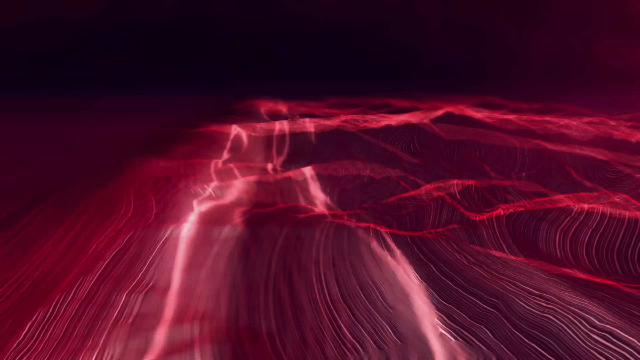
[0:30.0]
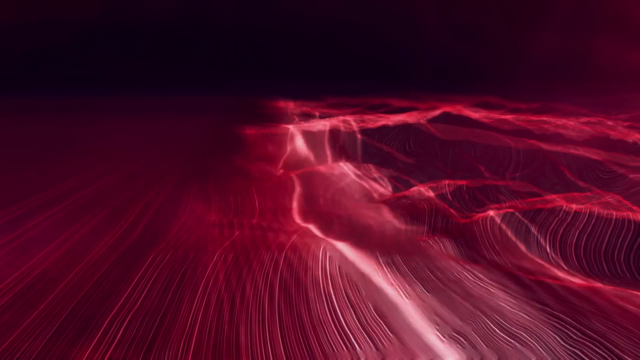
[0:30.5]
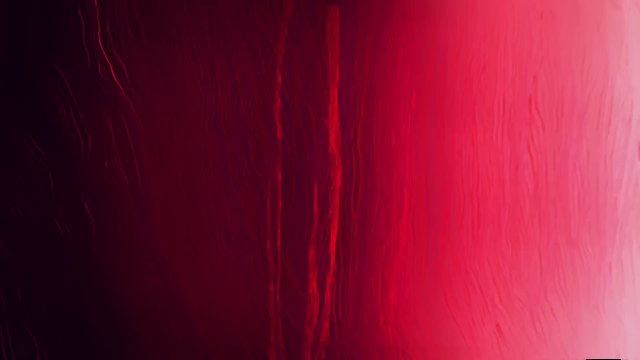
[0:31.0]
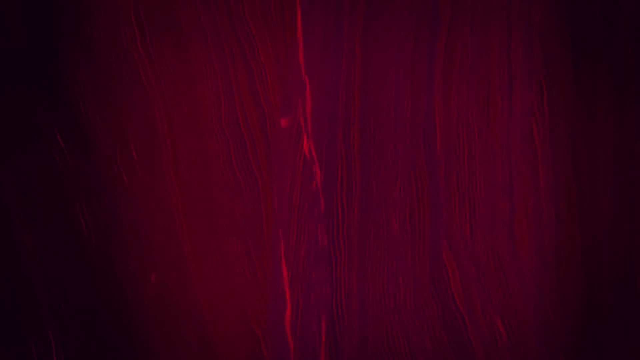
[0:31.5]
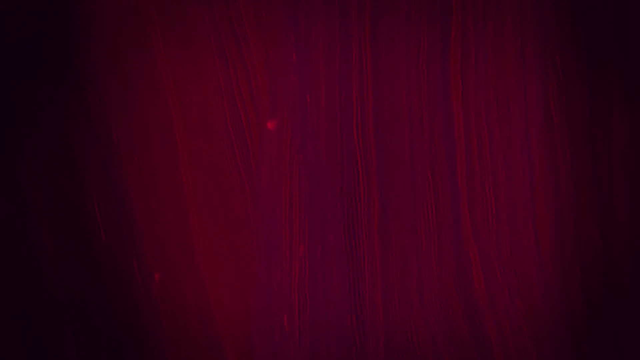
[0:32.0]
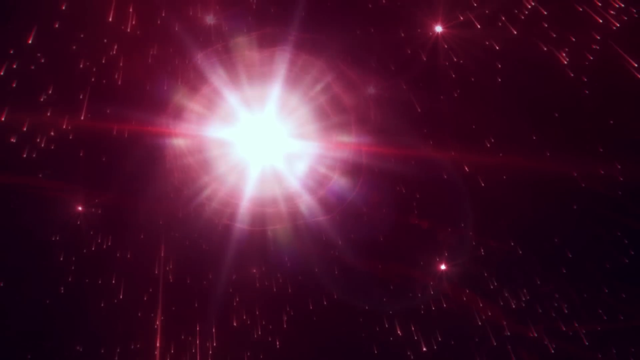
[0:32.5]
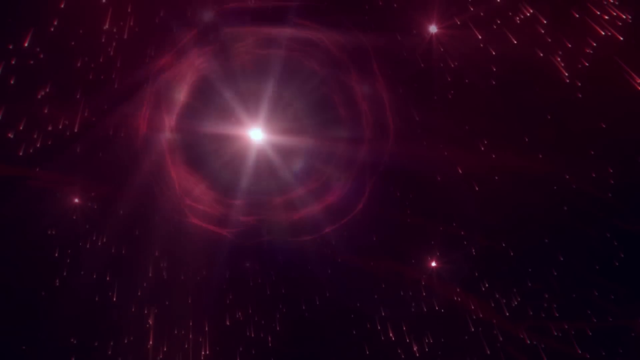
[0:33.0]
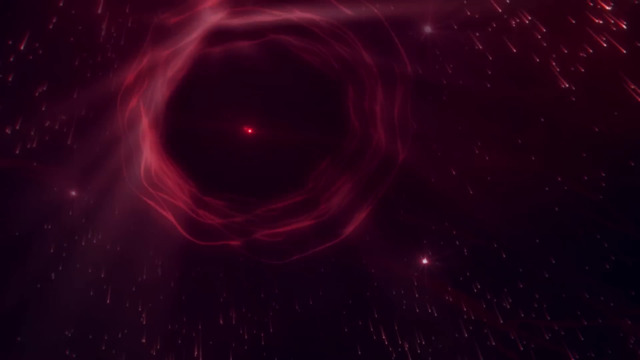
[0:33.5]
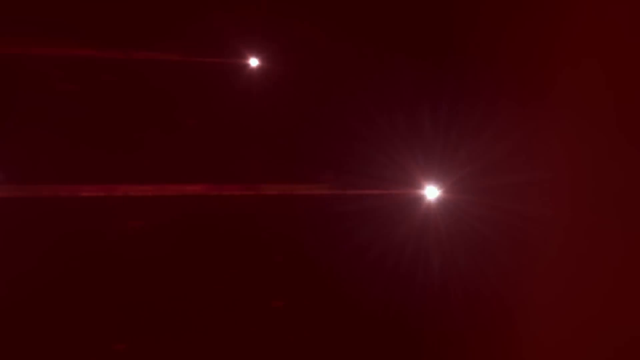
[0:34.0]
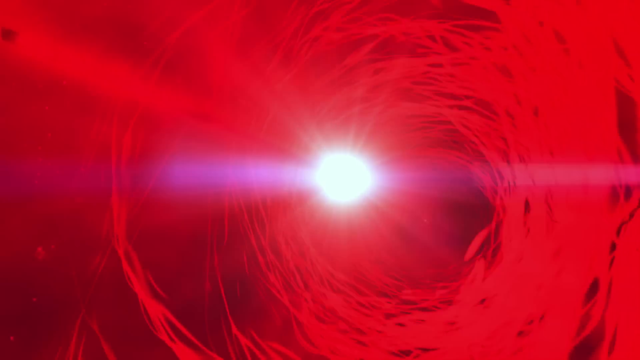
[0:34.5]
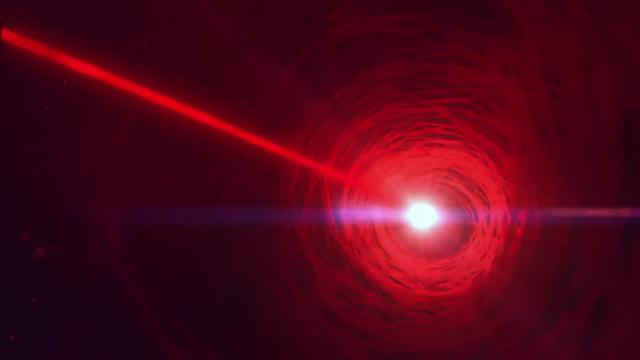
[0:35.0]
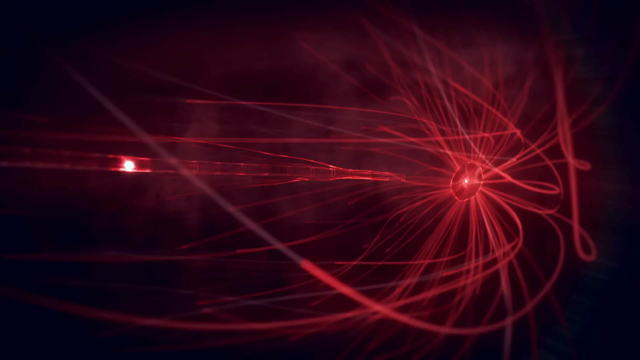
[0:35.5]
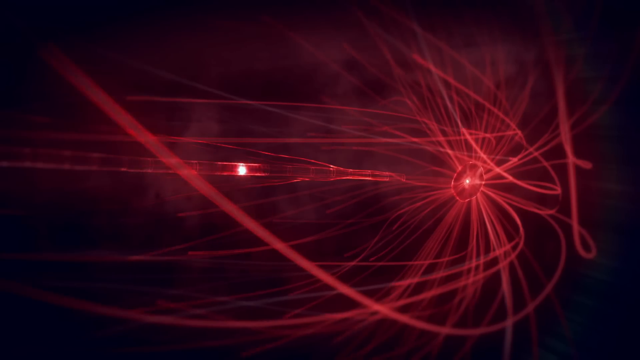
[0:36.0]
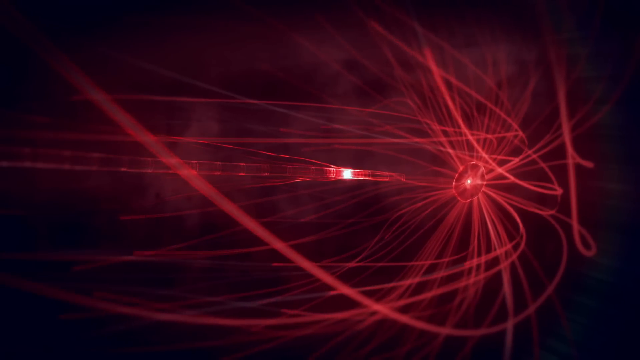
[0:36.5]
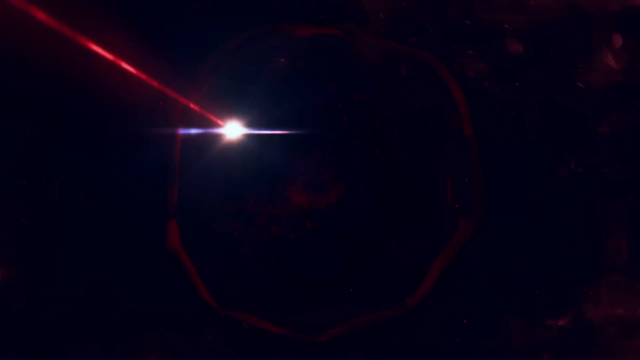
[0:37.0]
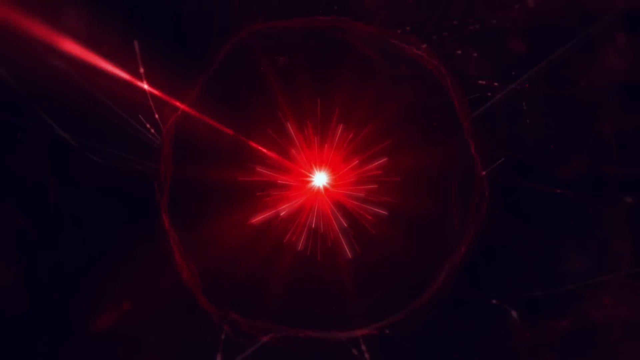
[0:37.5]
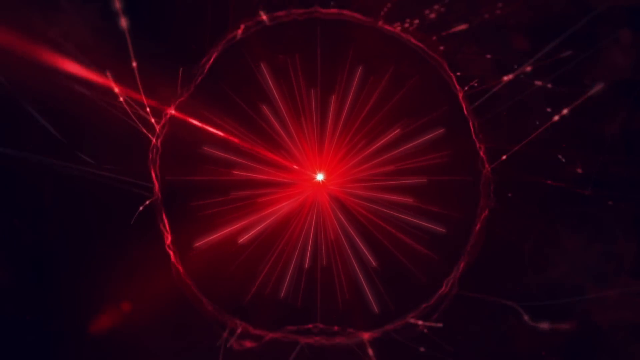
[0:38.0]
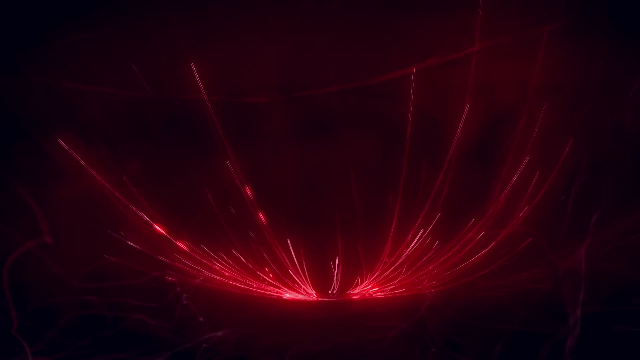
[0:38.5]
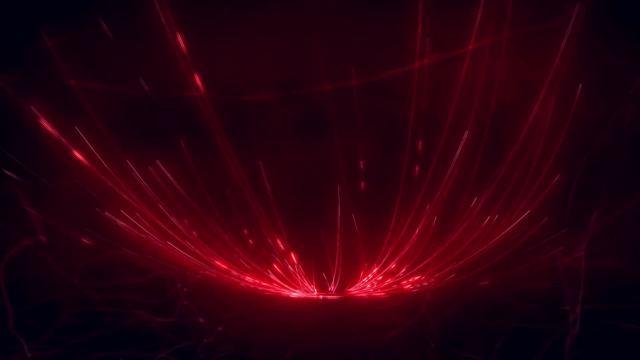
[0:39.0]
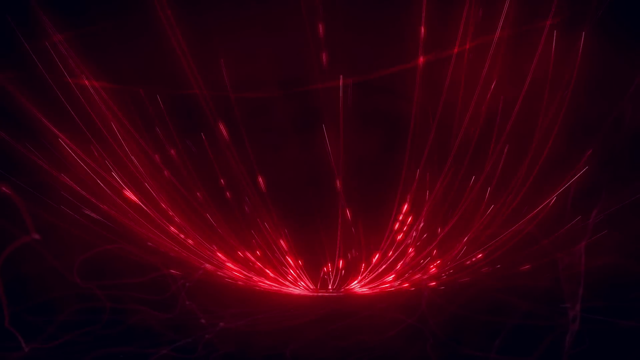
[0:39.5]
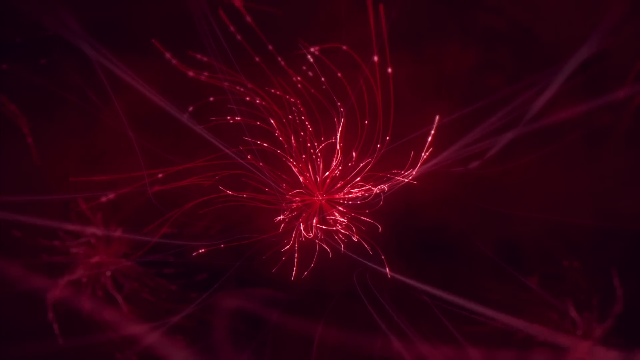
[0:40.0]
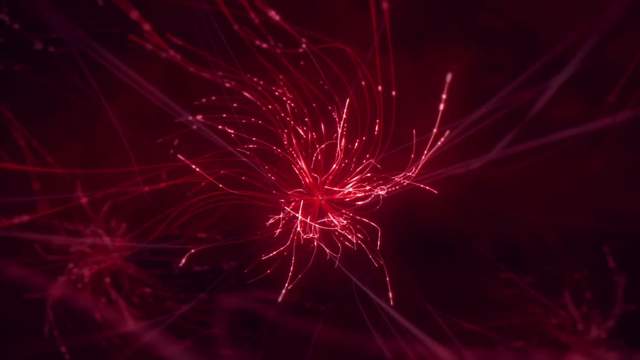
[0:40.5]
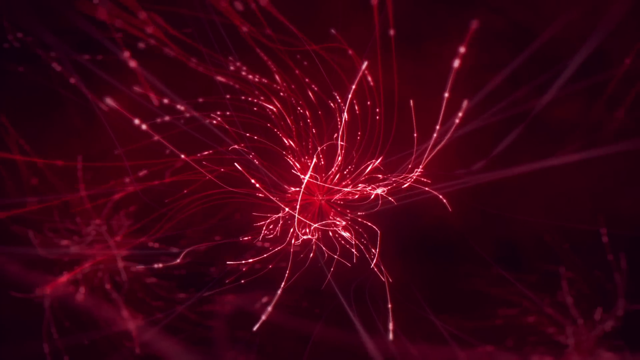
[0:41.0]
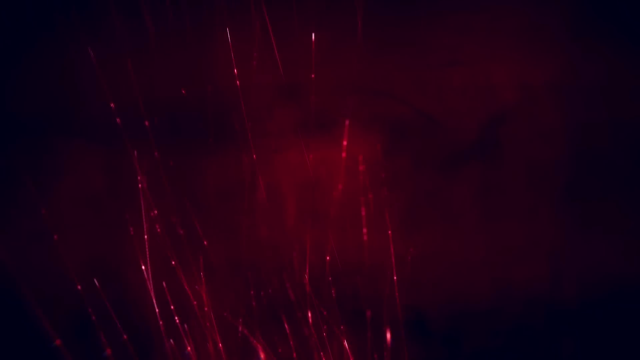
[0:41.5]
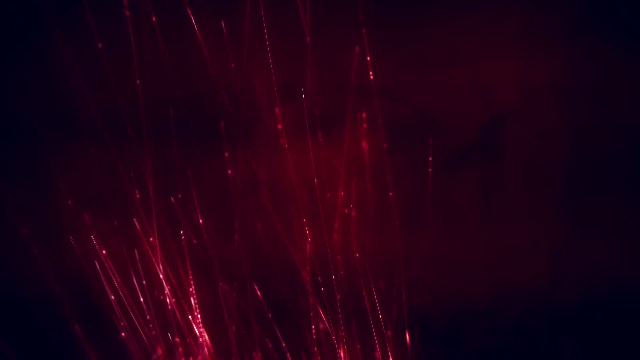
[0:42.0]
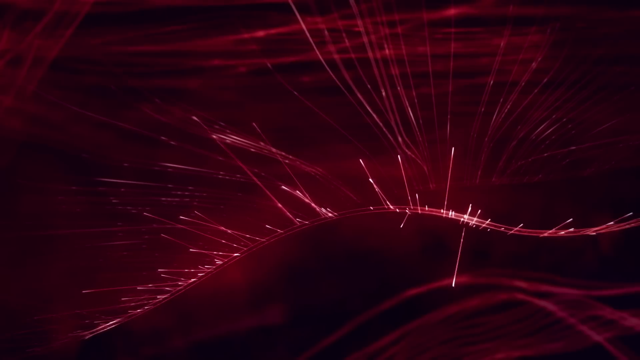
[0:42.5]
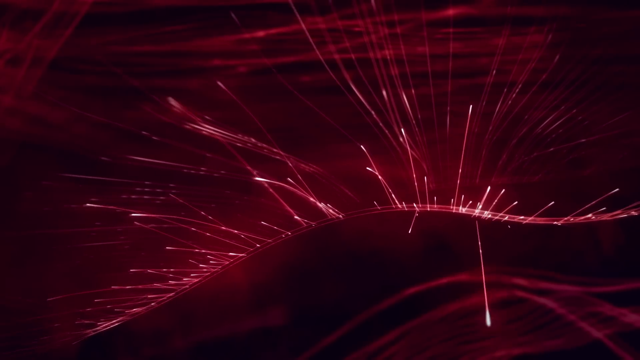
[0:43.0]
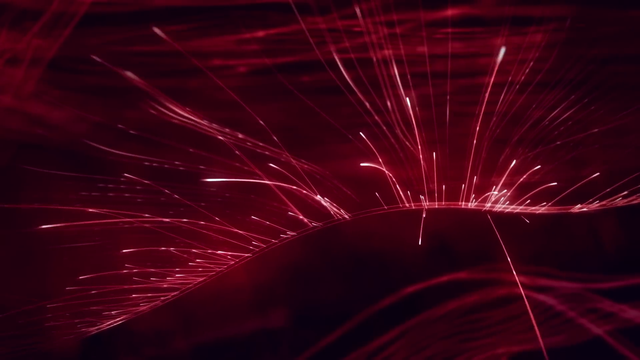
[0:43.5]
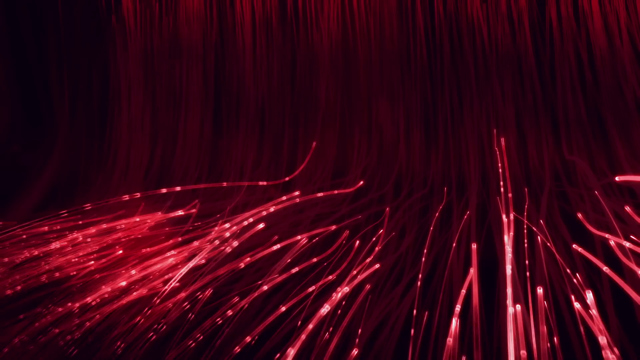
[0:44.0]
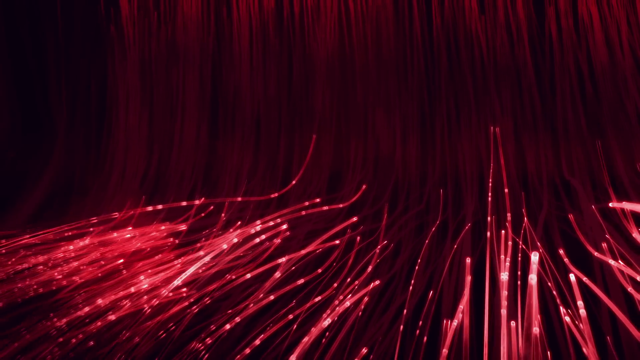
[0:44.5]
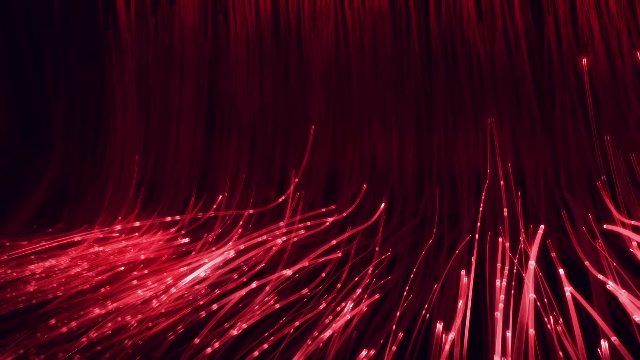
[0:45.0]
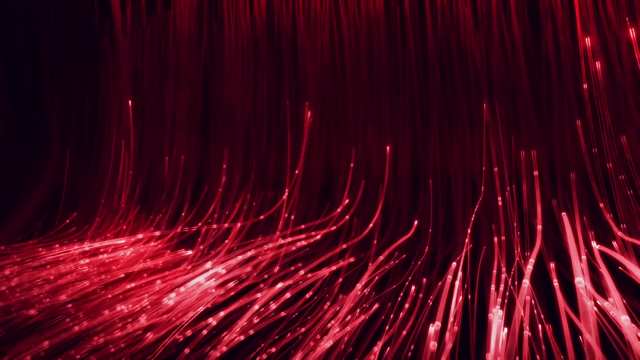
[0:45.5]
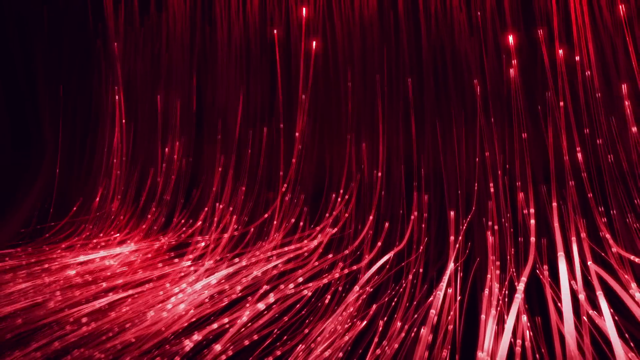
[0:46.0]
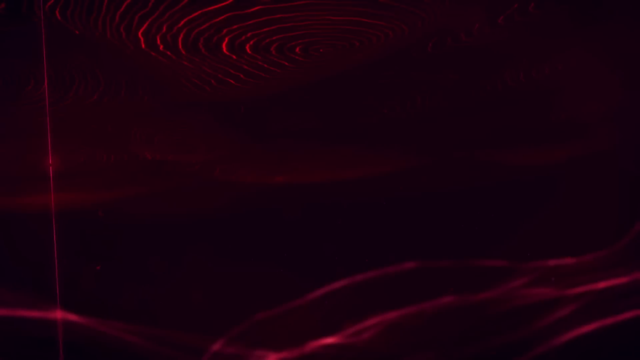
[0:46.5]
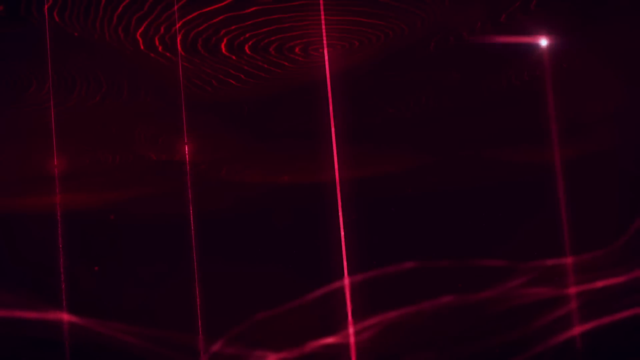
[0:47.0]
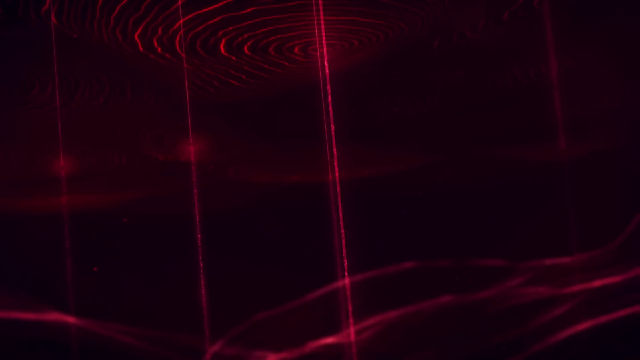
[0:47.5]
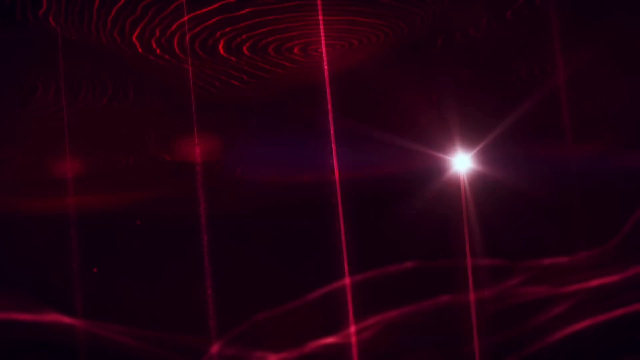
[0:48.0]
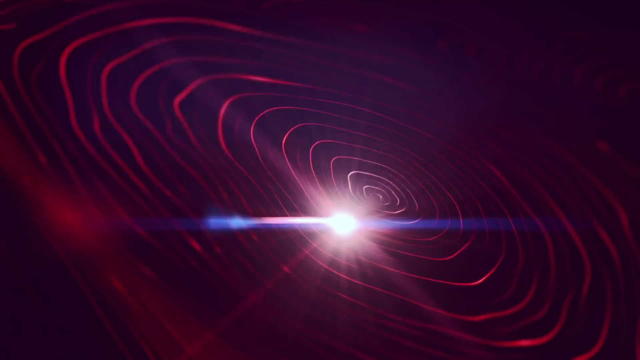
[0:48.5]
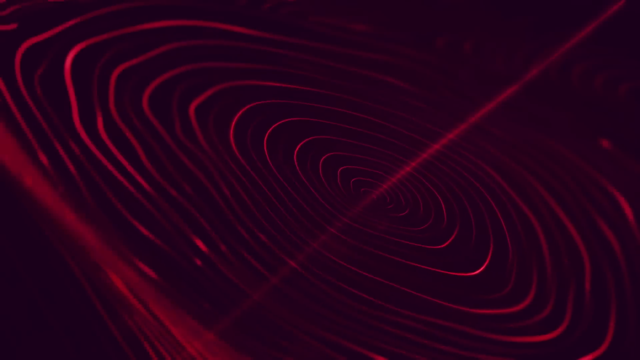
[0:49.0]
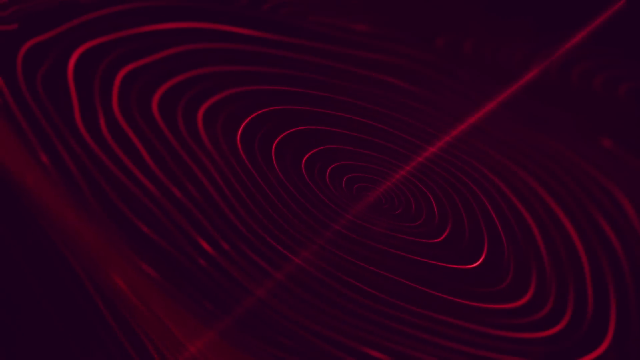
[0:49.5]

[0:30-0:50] Over a black background there are lots of red streaks, along with burgundy and a little pink and white, moving toward the right. Something that looks like a star is bright, gets bigger, and then goes smaller. Two glowing red dots kind of shoot toward what looks like a red tunnel. One goes into the tunnel area and then the other one too, and it kind of explodes into all kinds of squiggly lines that come up, move upward and expand out, almost like electrical wires climbing a wall and shooting up. They fill the whole area in the background. It becomes almost a very central white area with all these lines shooting upward, kind of making a knitted area at the top, with the lines coming from the bottom, where there are also kind of knitted lines.